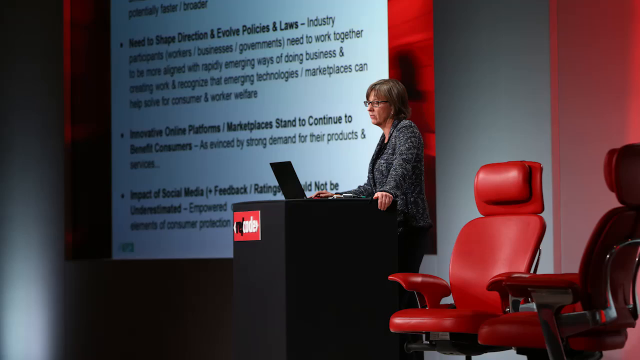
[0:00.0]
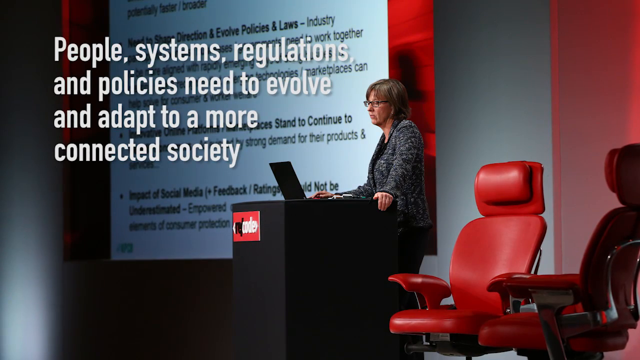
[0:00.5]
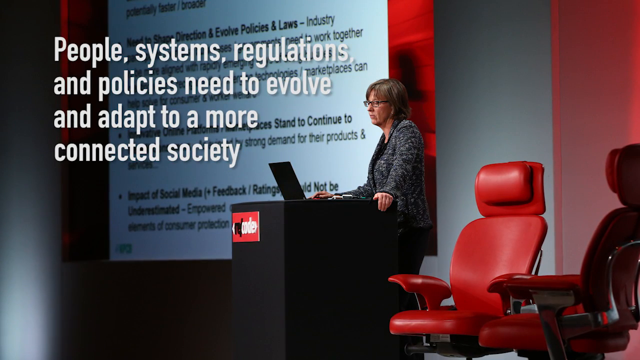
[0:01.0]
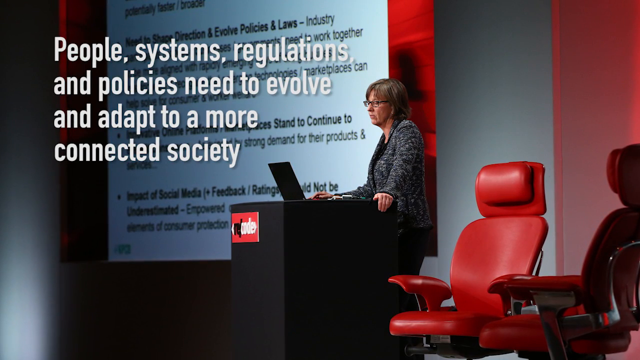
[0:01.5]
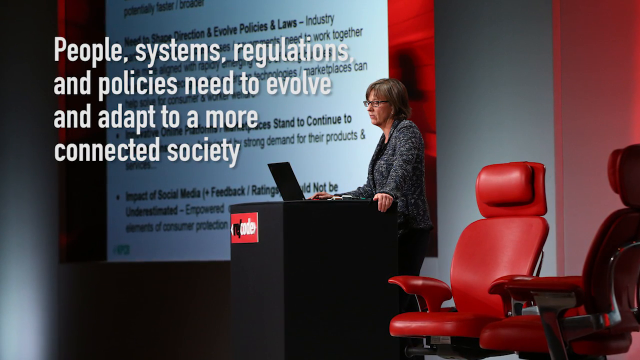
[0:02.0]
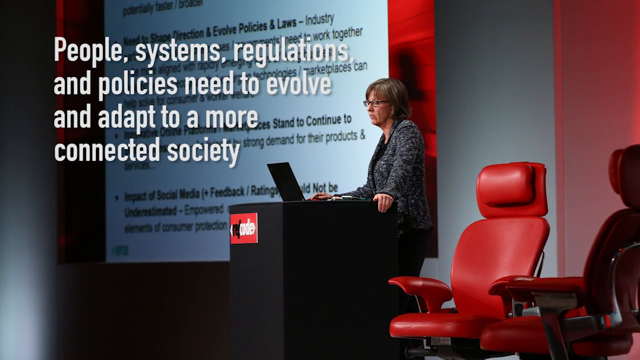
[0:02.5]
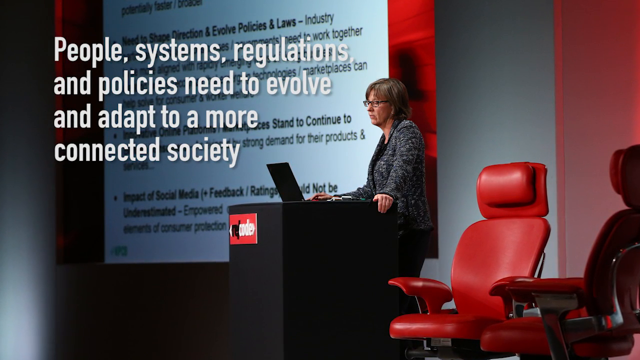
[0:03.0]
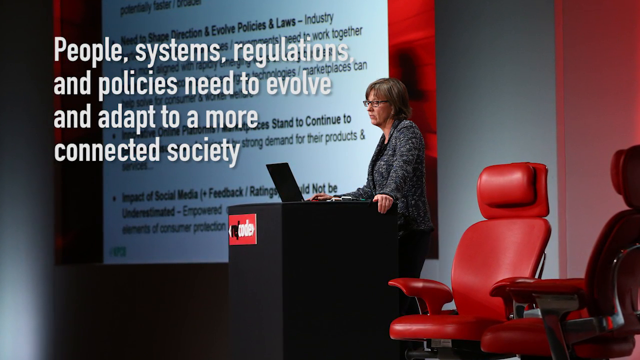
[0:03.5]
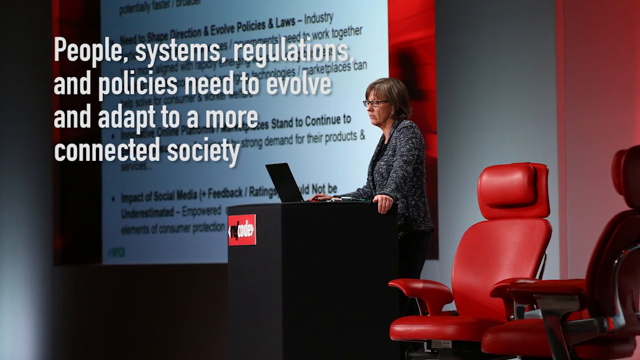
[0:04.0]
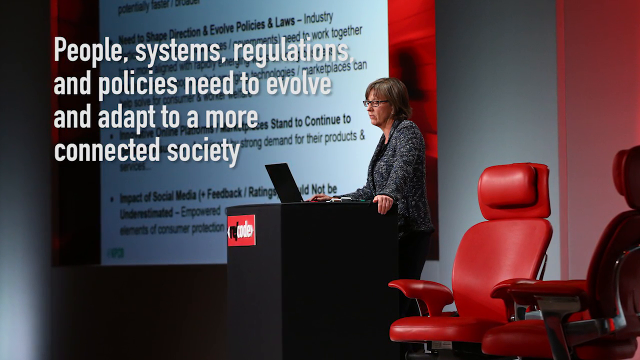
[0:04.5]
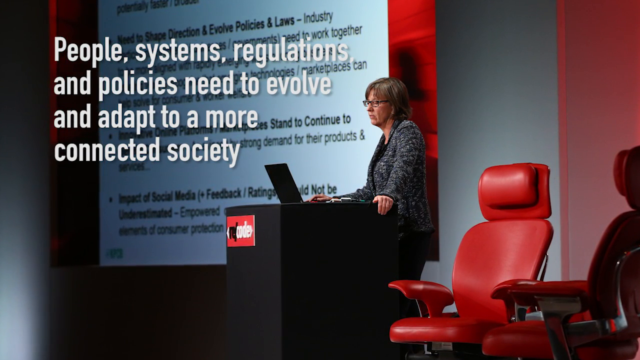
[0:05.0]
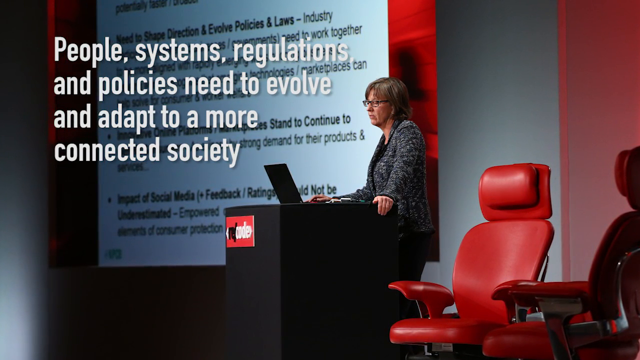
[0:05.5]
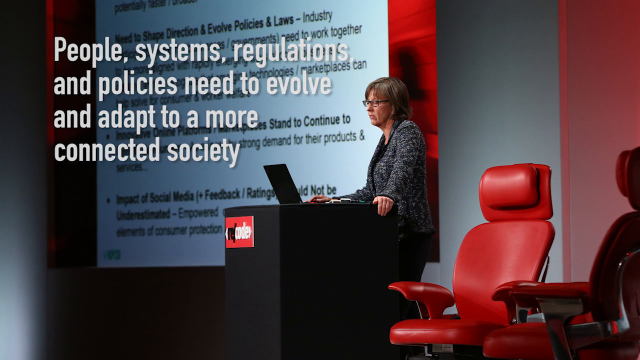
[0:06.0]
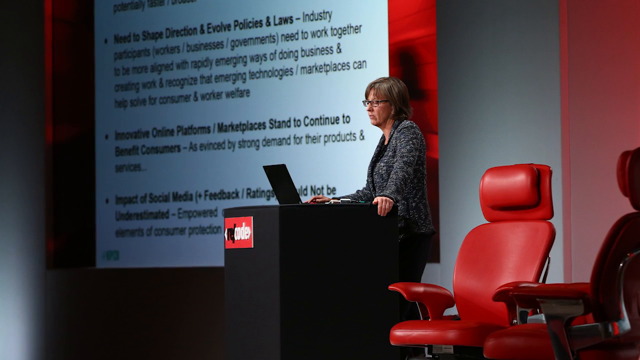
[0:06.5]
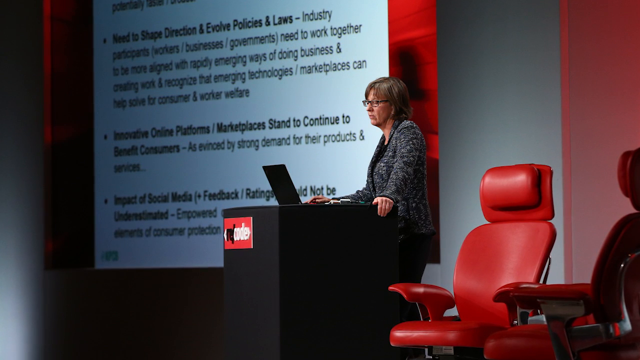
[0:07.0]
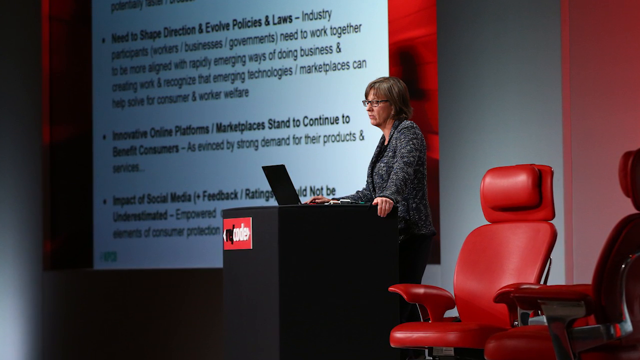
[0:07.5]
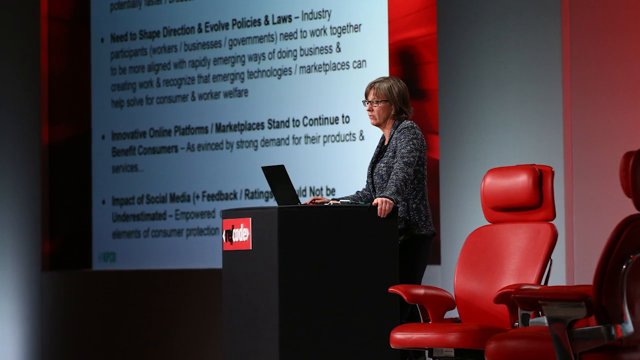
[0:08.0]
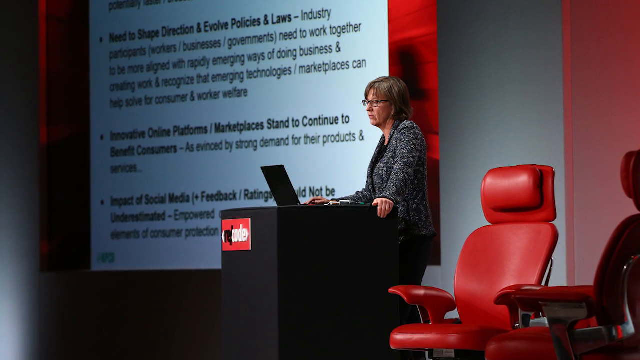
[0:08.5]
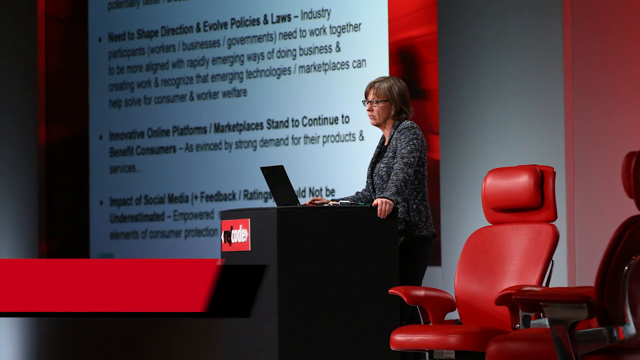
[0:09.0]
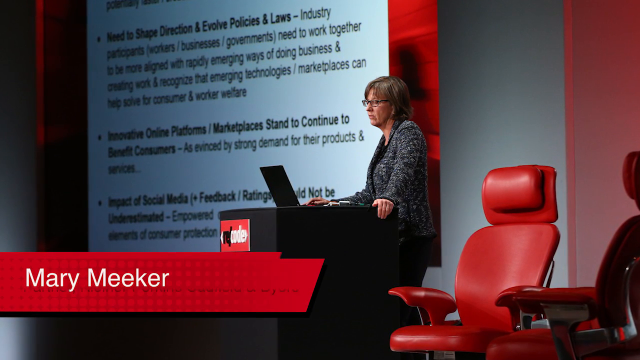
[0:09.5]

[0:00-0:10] A still image shows a woman standing in a darkened room behind a podium, with an open laptop in front of her. The podium has a red placard on the front with black and white lettering. Behind her is a red leather desk chair, and behind her to the right a projection is up, showing multiple lines of black text on a white background. After a few seconds, four lines of text appear on the screen: "people, systems, regulations", "and policies need to evolve", "and adapt to a more", "connected society". The text stays up for a few seconds before the lines disappear. A red bar then swooshes out from the bottom left-hand corner, moving left to right and covering about half of the bottom of the screen. It shows the name "Mary Meeker" in white lettering, and directly underneath are some words in black letters that are blurry and hard to make out.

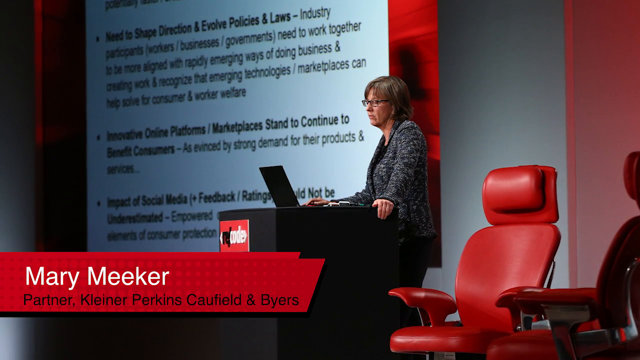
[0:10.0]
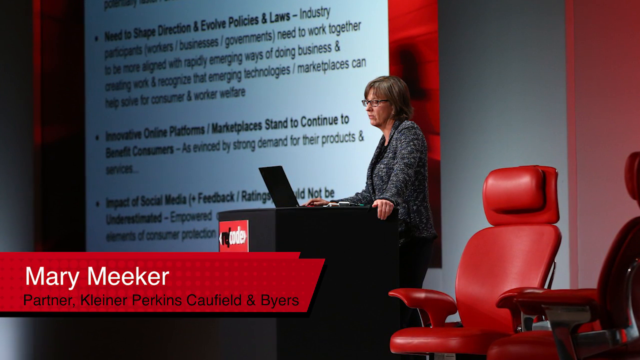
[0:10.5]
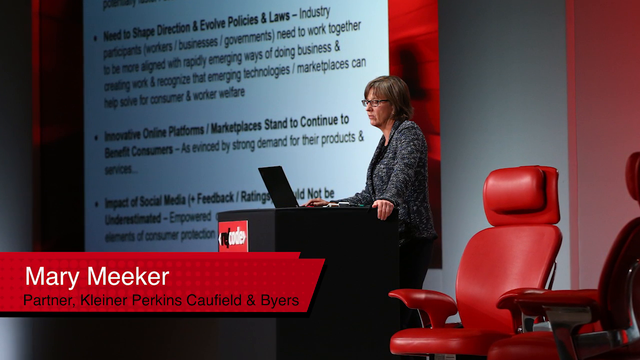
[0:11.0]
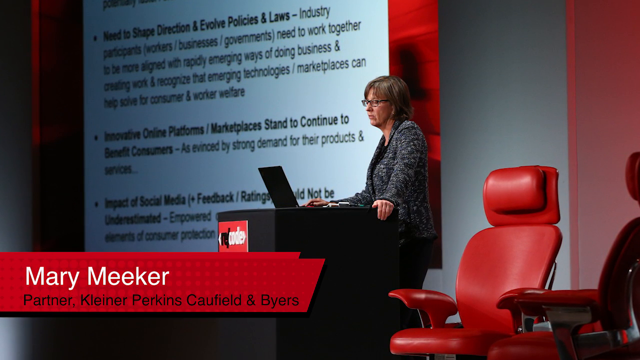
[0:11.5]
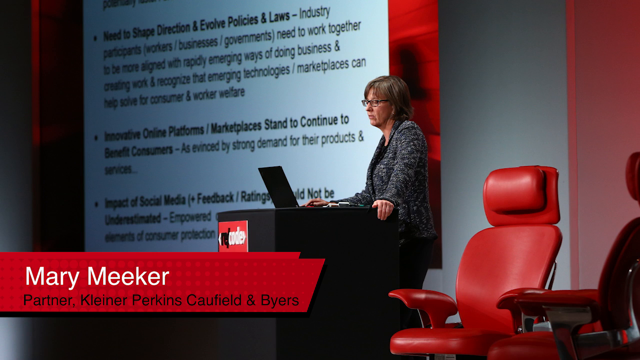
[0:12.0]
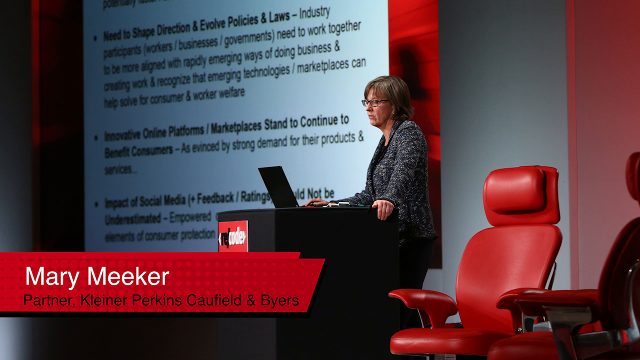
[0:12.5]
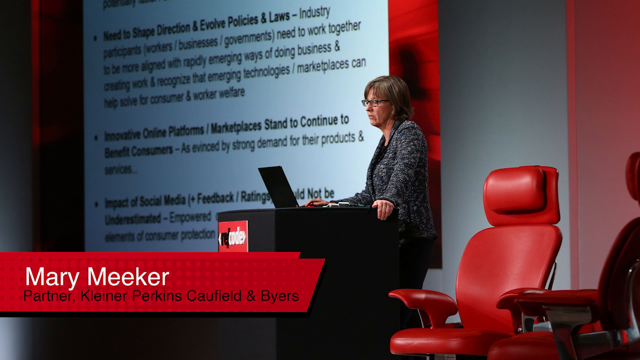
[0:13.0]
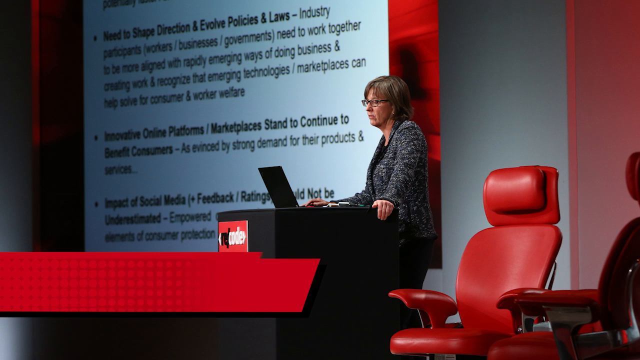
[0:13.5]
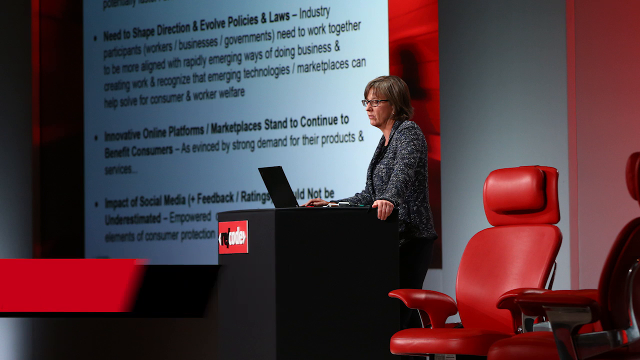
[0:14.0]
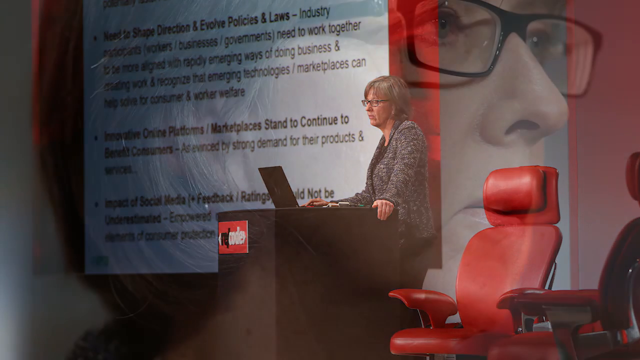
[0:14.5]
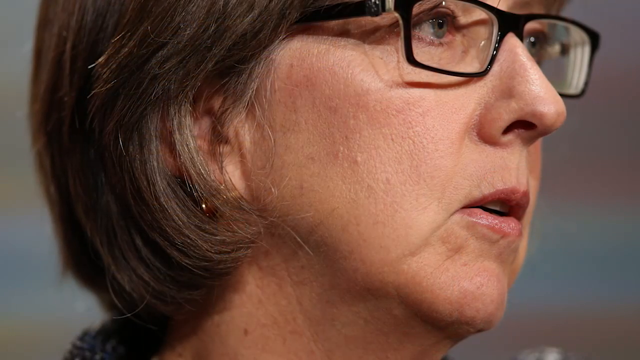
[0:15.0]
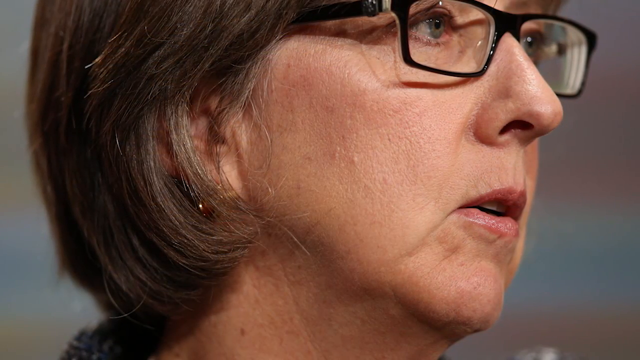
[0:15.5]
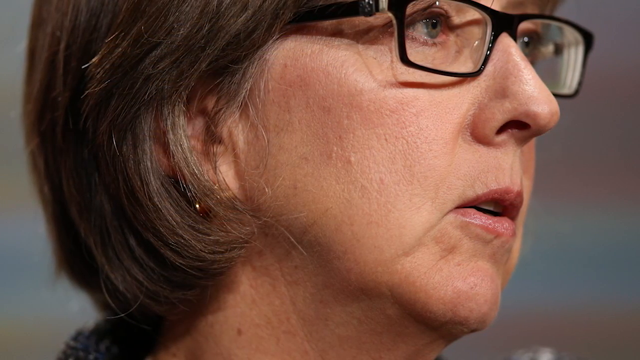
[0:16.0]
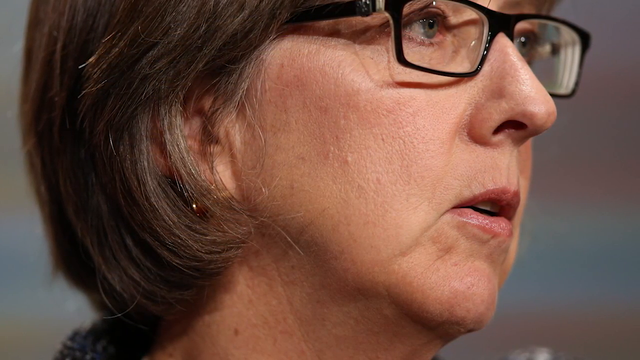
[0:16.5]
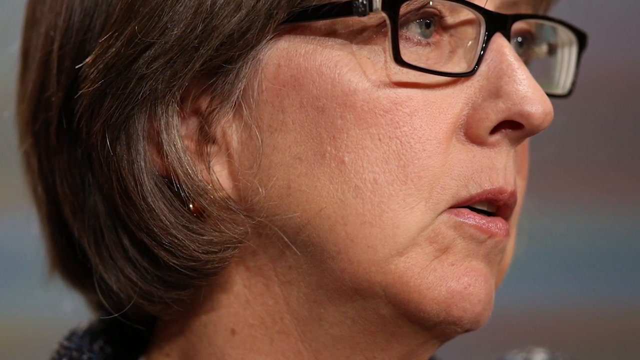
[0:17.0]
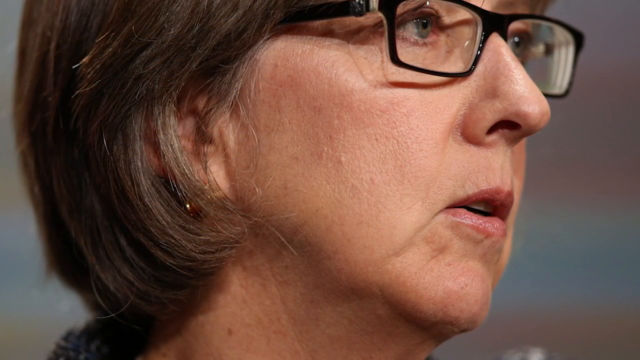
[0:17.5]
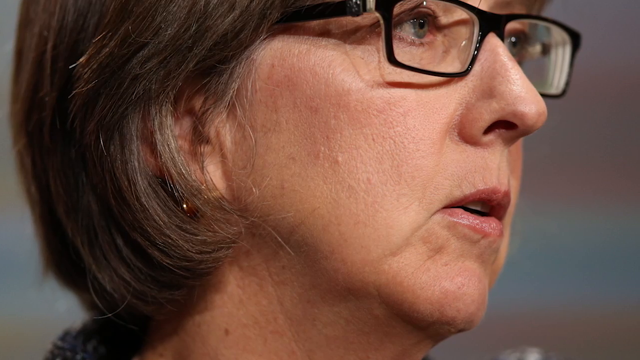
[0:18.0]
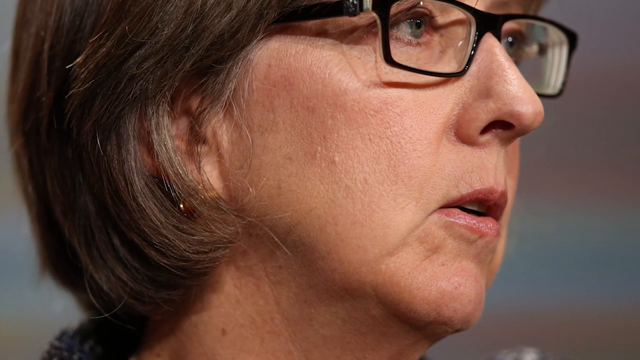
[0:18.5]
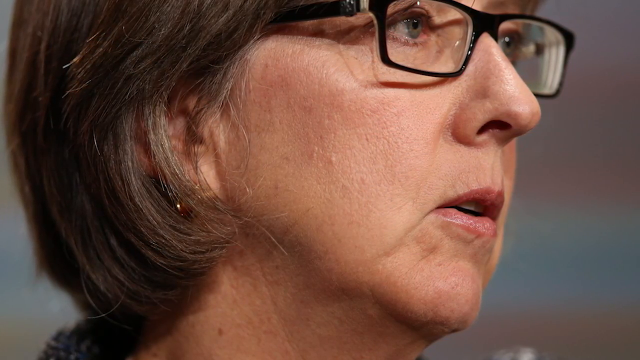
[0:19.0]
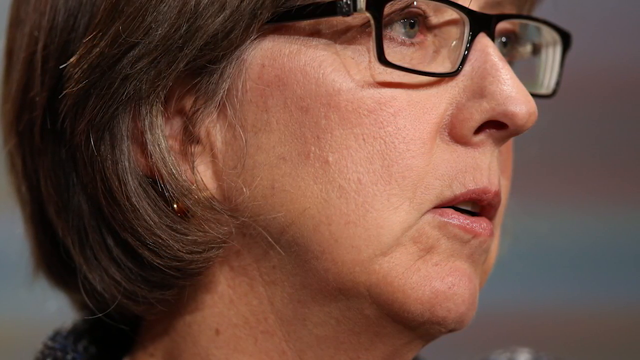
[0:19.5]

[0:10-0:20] A still shot shows a woman standing behind a podium with a laptop open in front of her. A red placard with black and white lettering is on the front of the podium. Behind her is a red leather desk chair, and behind her to the right is a projection on the wall with black lettering on a white background. At the bottom of the screen, a red bar extending about halfway across shows the name "Mary Meeker" in white letters, with black letters beneath reading "Partner, Kleiner Perkins Caufield and Byers". After a few seconds, the name and the text underneath disappear, and the red bar swooshes to the left and off screen. The scene changes to a close-up of the same woman, a white woman wearing black-rimmed rectangular glasses. She stares off toward the right of the screen, showing a side profile of the right side of her face.